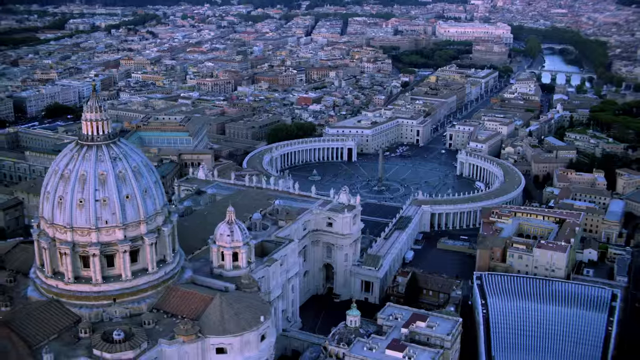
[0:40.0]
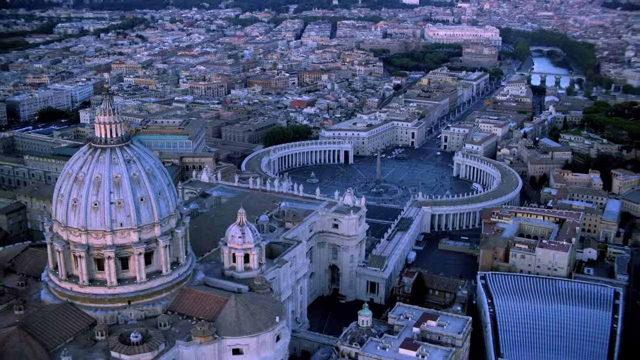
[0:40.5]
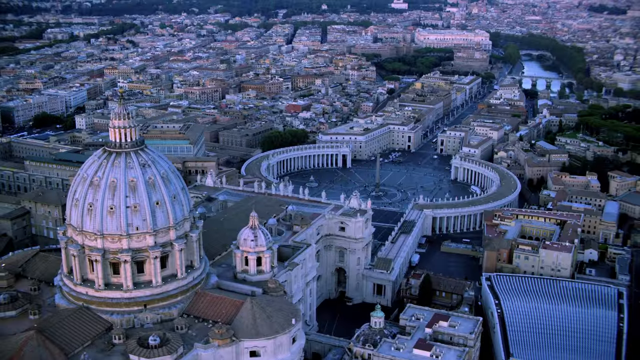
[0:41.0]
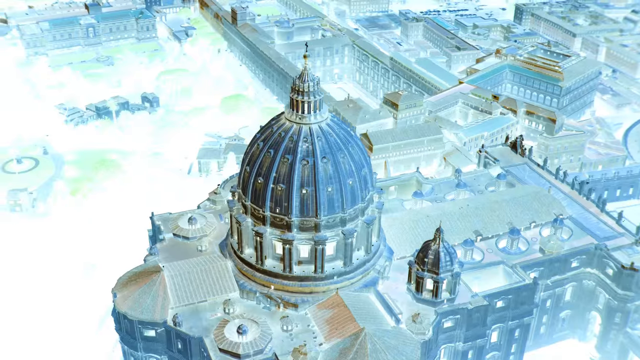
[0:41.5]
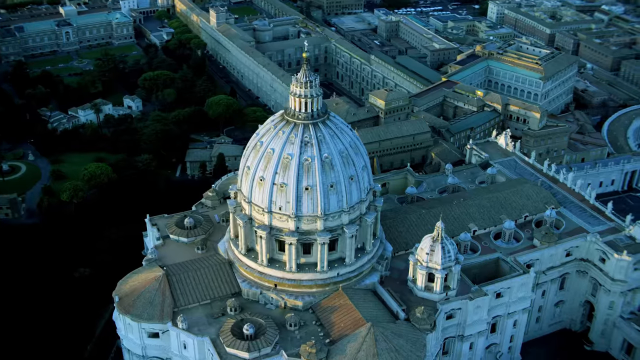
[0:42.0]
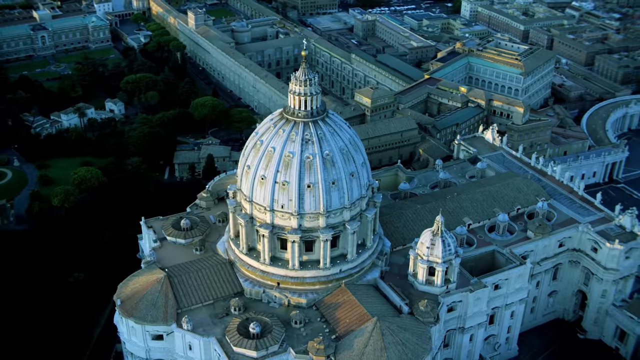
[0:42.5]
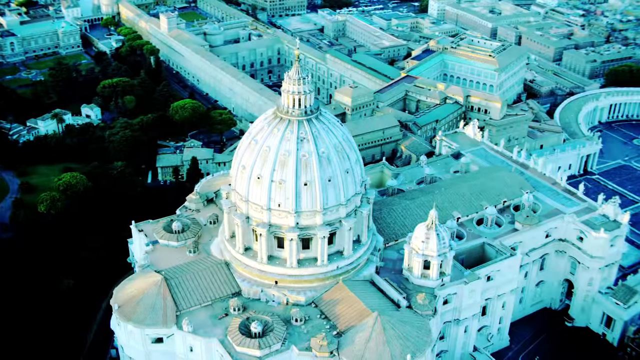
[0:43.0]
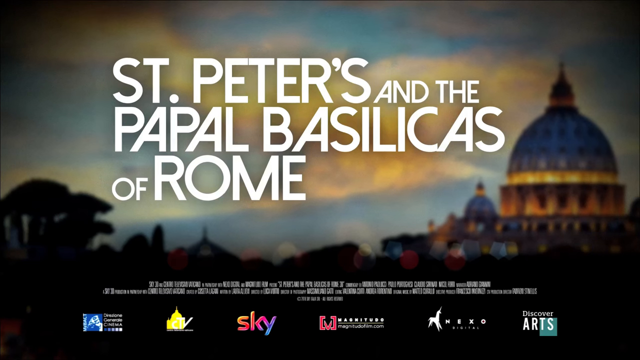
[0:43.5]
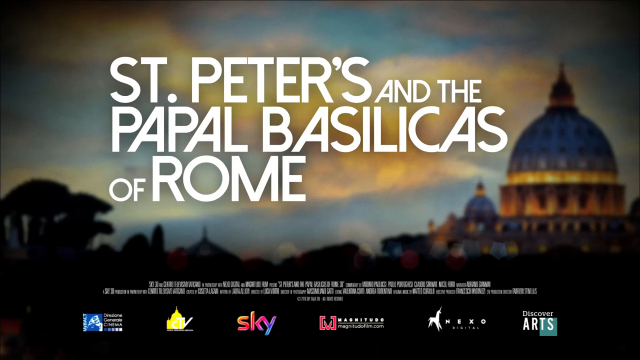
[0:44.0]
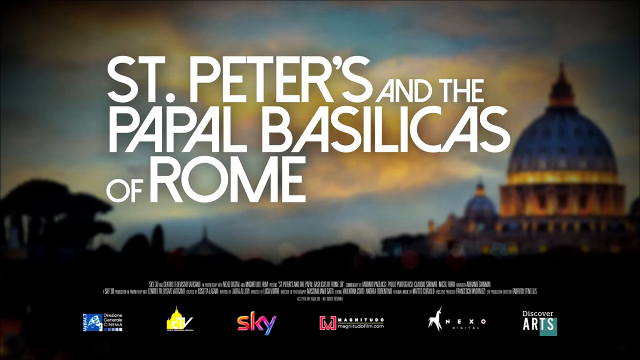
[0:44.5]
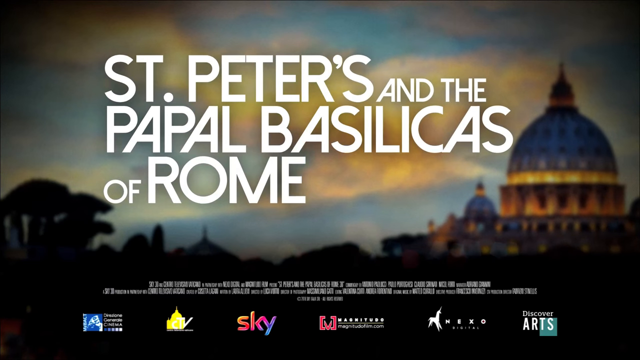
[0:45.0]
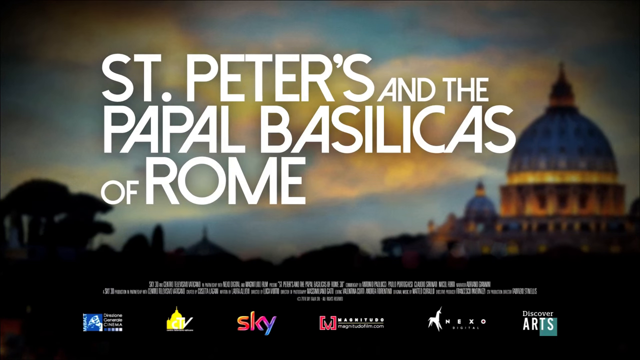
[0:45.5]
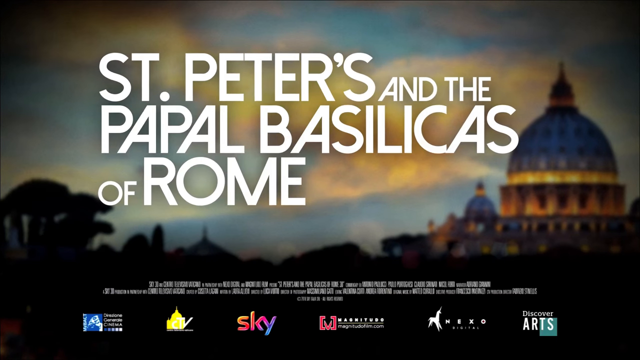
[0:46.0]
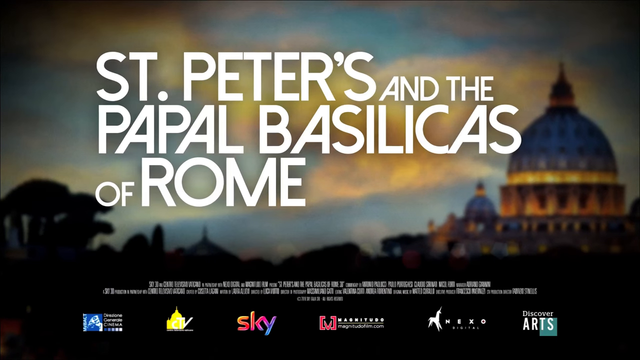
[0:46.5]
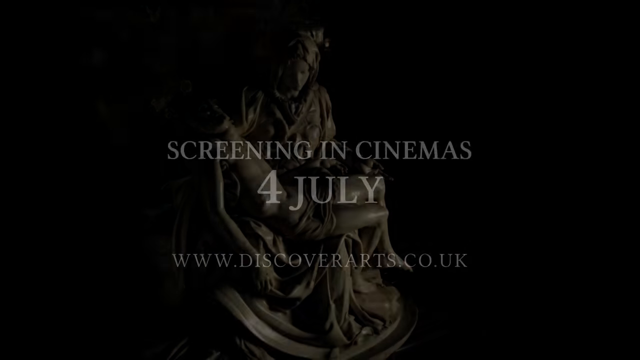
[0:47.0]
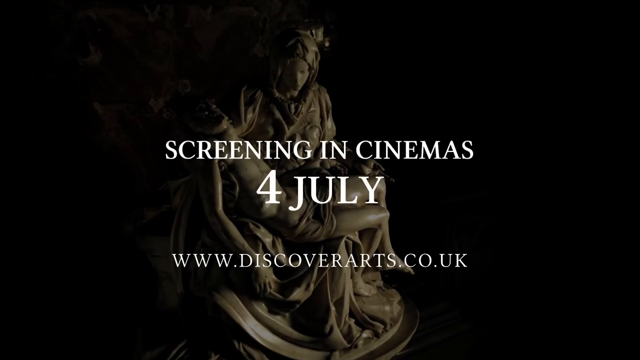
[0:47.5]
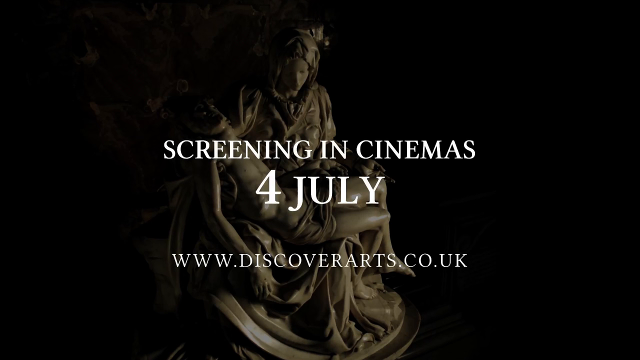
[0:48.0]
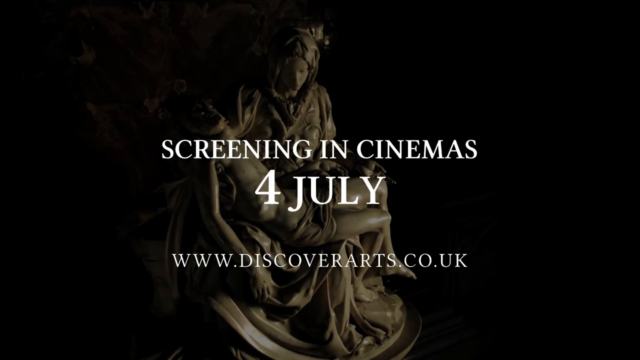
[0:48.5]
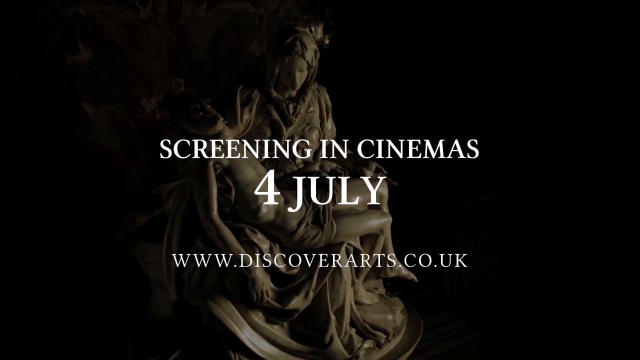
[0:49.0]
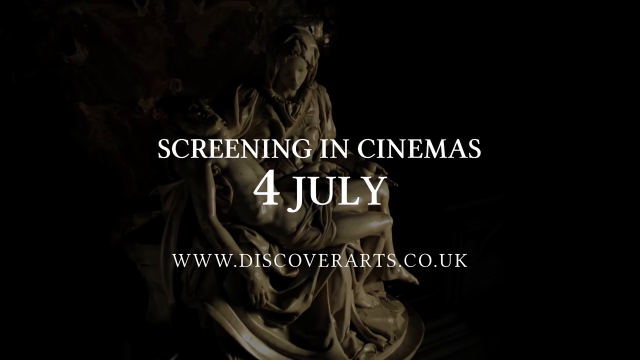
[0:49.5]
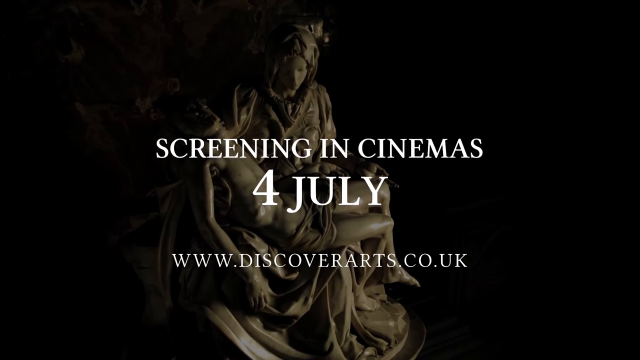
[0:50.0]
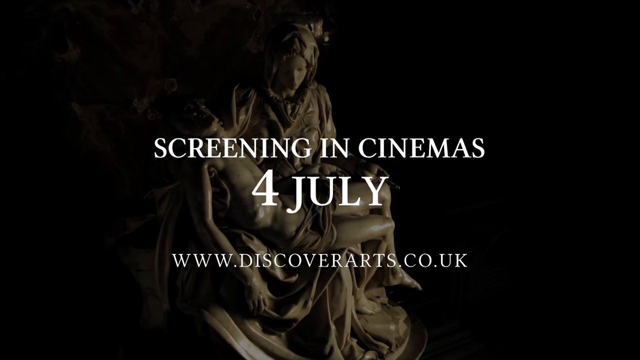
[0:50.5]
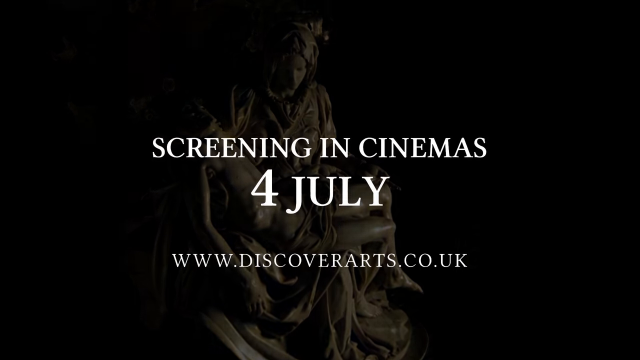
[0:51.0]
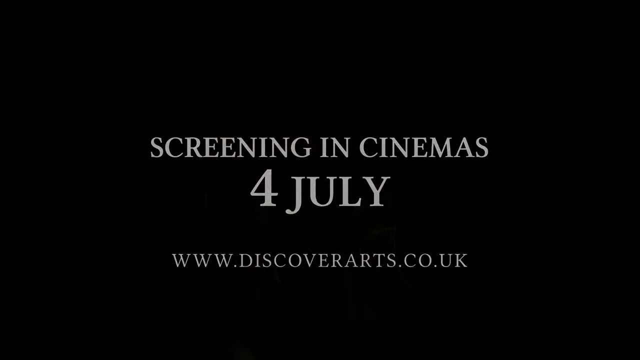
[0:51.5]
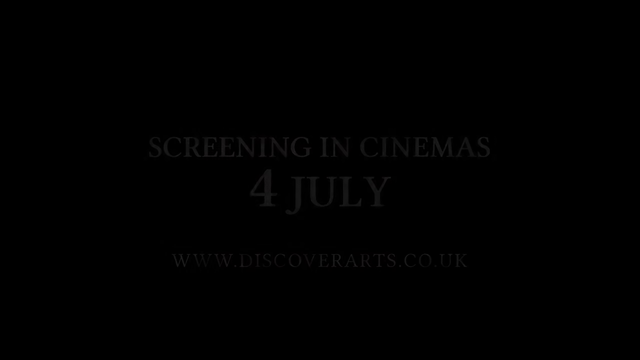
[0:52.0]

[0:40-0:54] A bird's-eye view of St. Peter's Basilica appears, with video edits in which some of the scenes are lighter, with overexposure. What seems to be the ending scene then says "St. Peter's and the Papal Basilicas of Rome," produced by Sky as well as Metro, Discovery Arts and a few others. A shot of the Vatican follows, and then a shot of the Pietà by Michelangelo with text above it that says "Screening in cinemas July 4th" and "discoveryarts.co.uk."